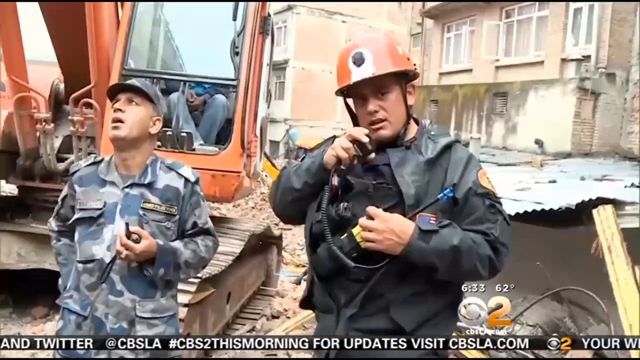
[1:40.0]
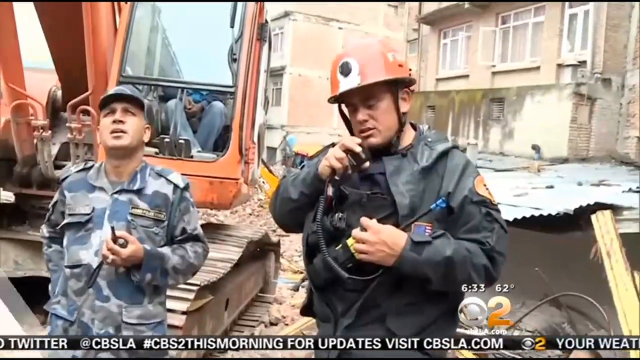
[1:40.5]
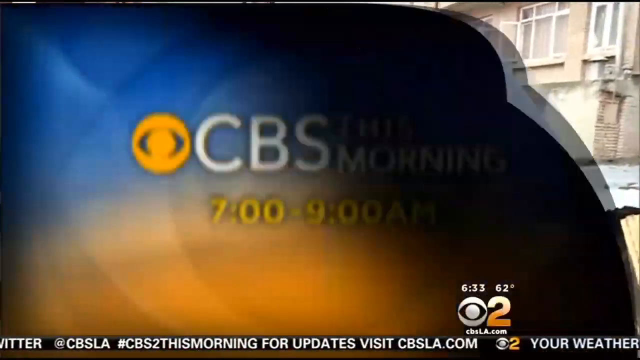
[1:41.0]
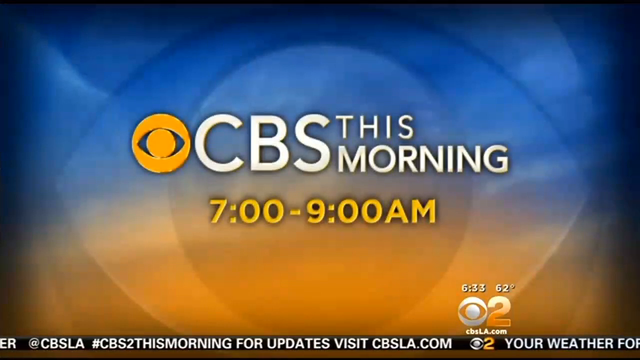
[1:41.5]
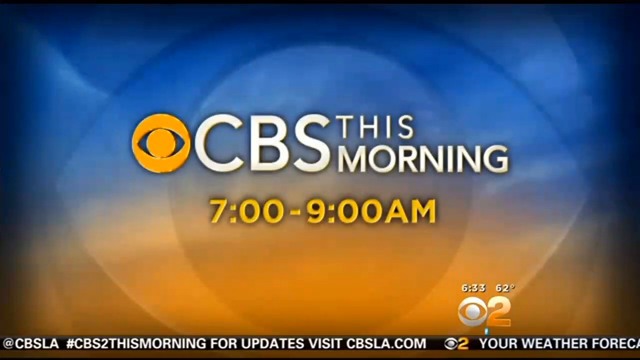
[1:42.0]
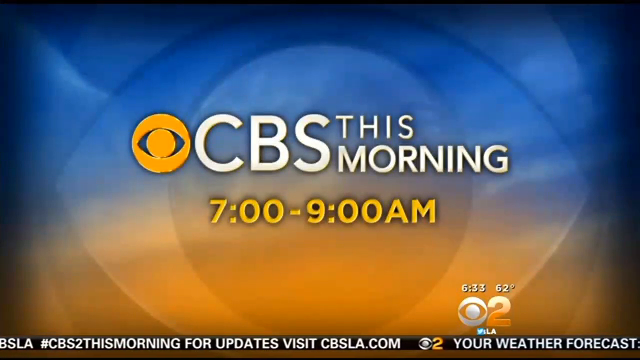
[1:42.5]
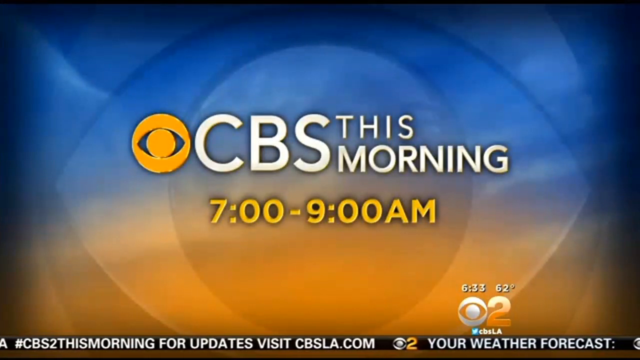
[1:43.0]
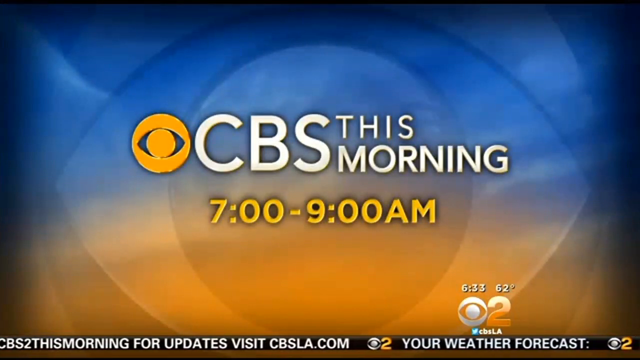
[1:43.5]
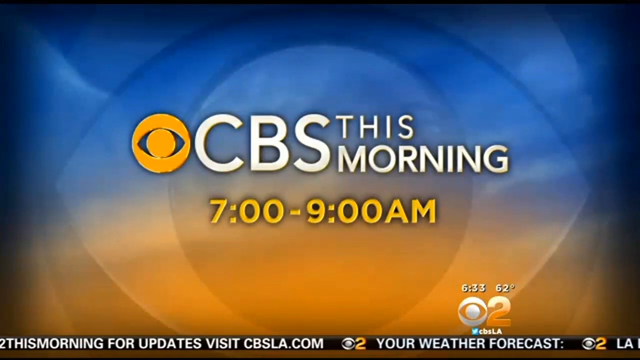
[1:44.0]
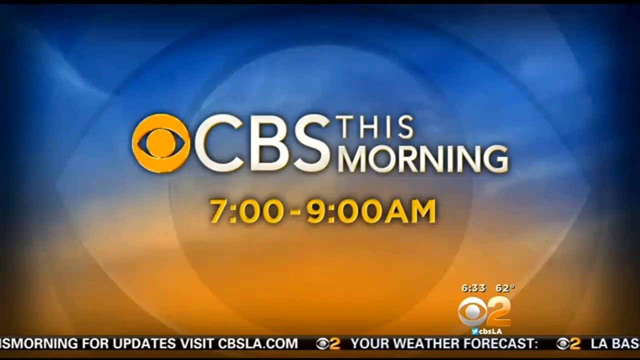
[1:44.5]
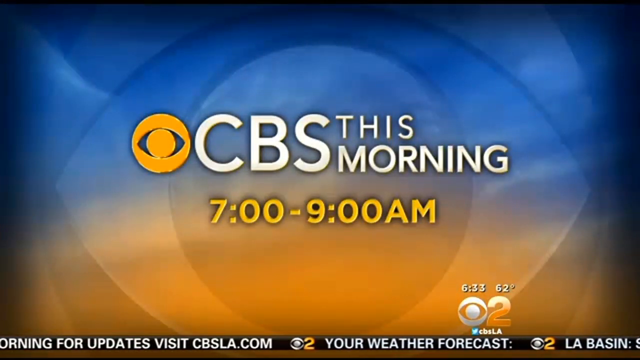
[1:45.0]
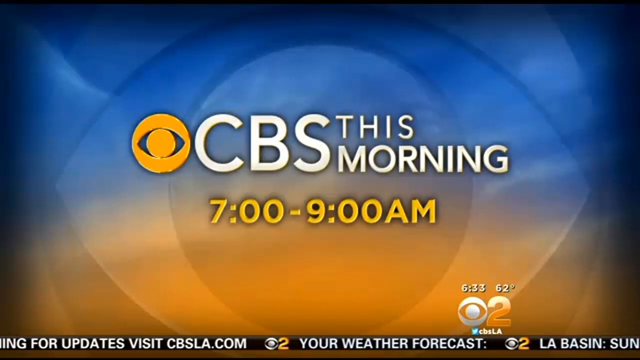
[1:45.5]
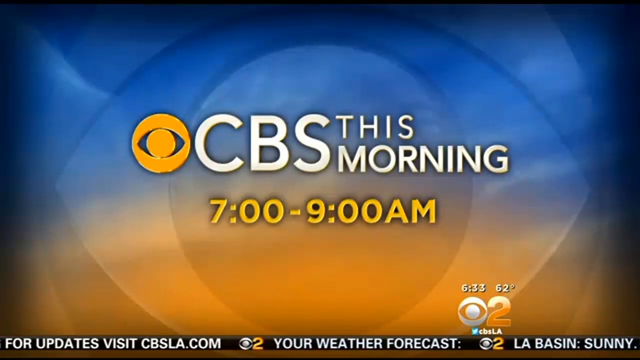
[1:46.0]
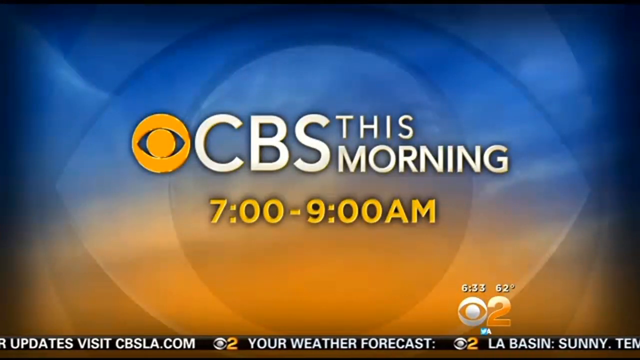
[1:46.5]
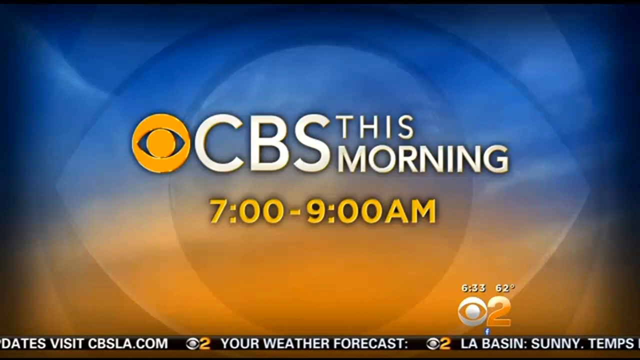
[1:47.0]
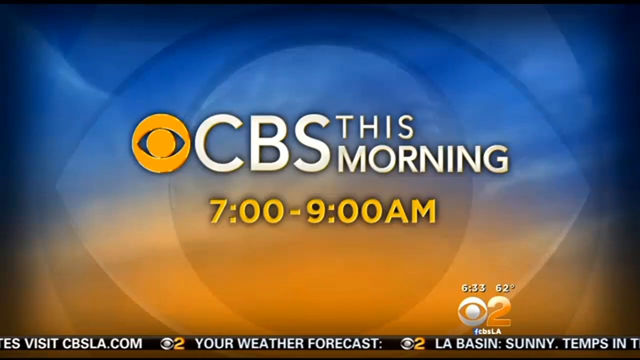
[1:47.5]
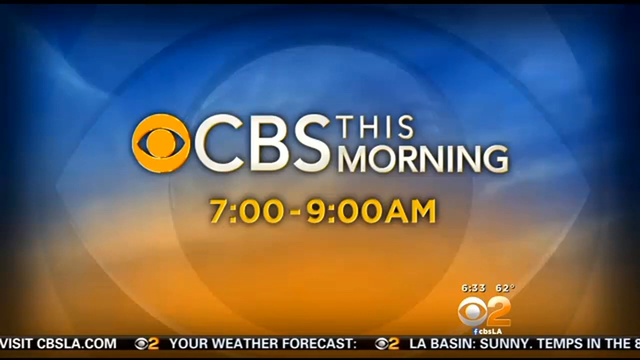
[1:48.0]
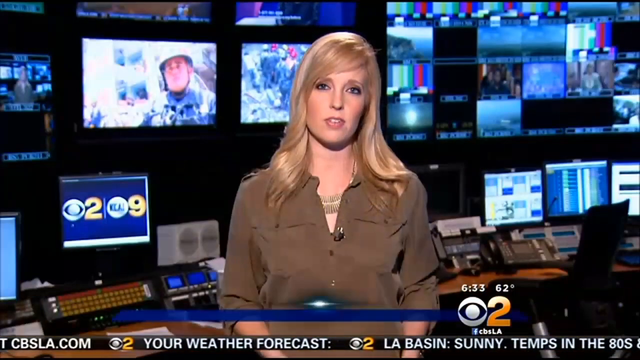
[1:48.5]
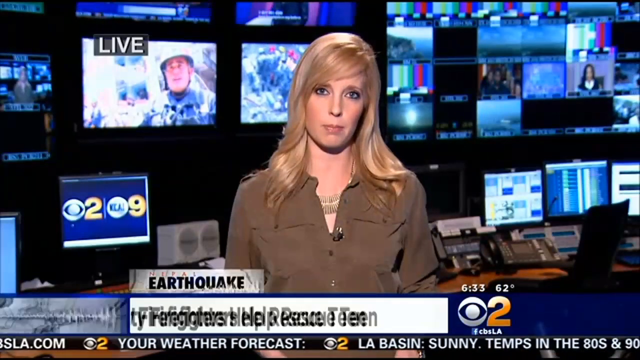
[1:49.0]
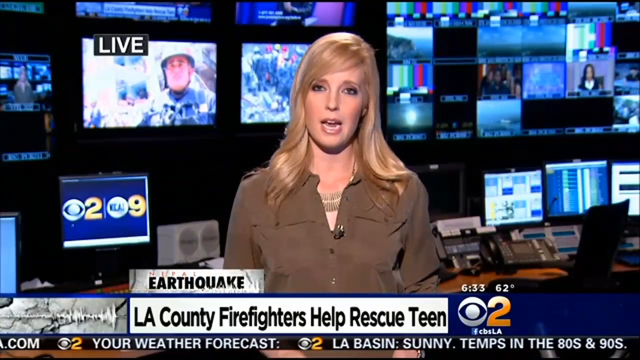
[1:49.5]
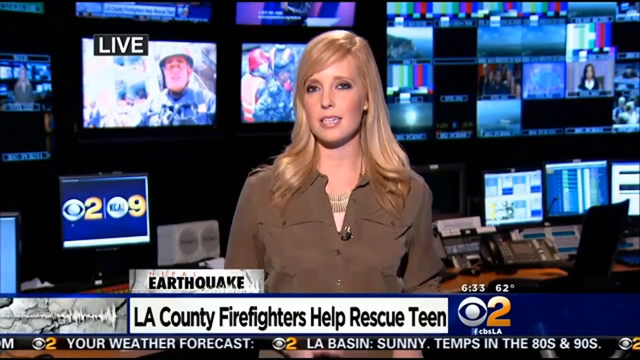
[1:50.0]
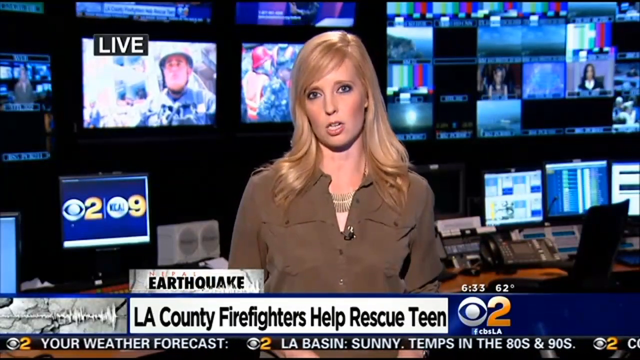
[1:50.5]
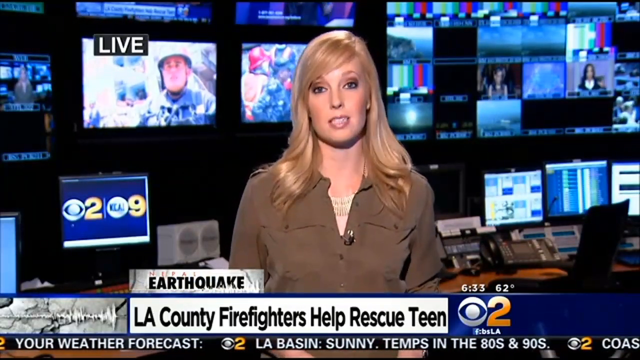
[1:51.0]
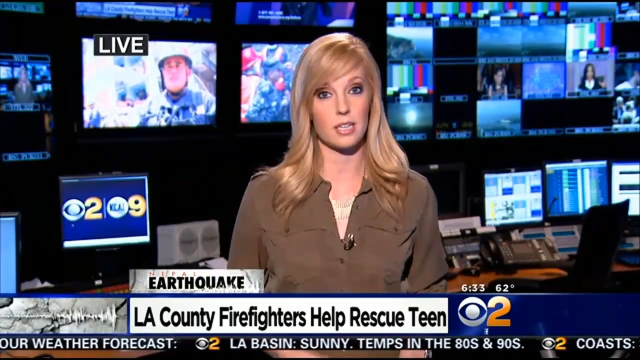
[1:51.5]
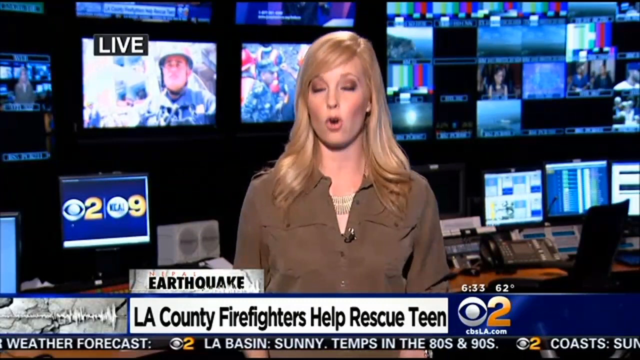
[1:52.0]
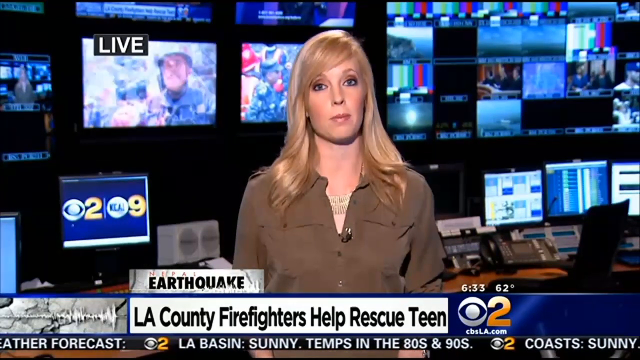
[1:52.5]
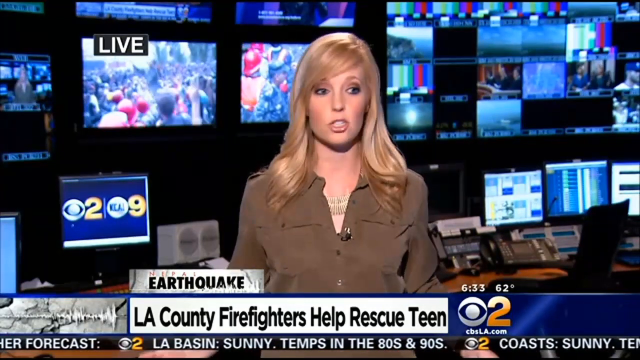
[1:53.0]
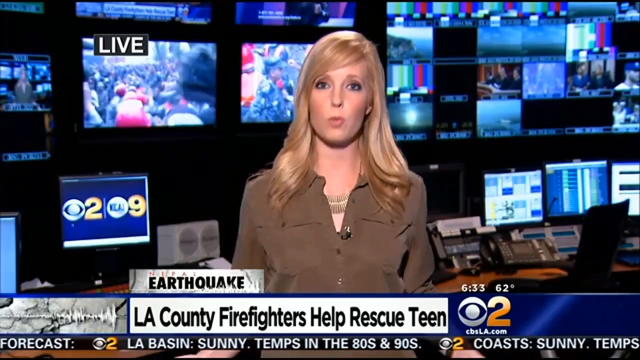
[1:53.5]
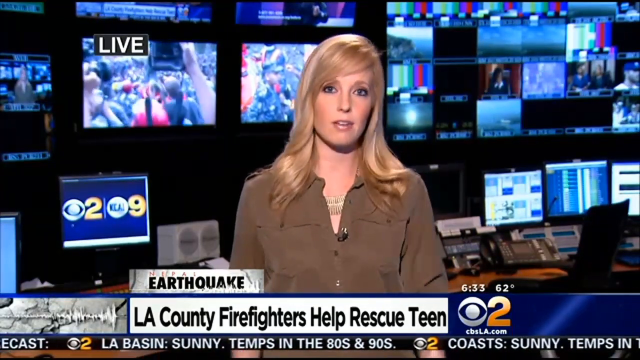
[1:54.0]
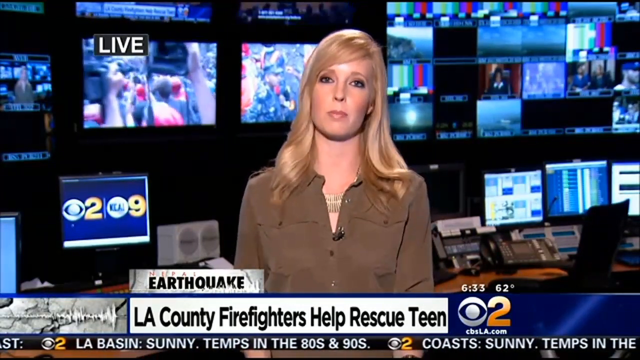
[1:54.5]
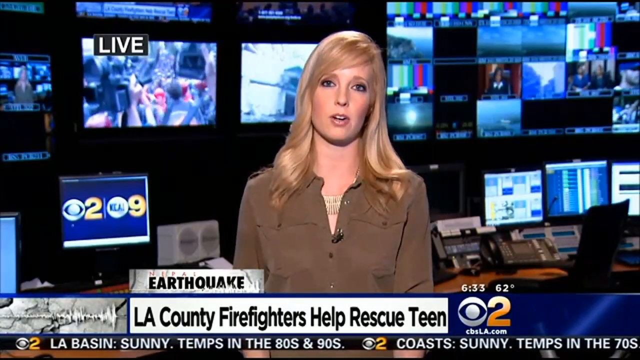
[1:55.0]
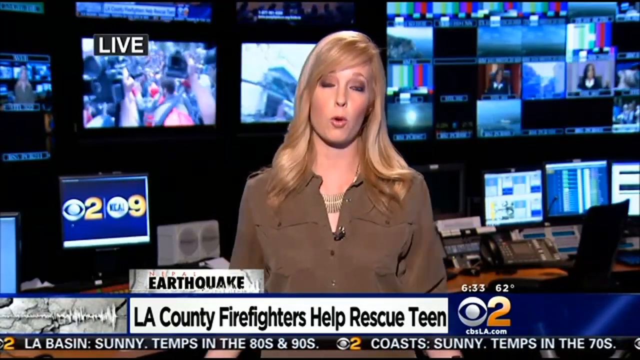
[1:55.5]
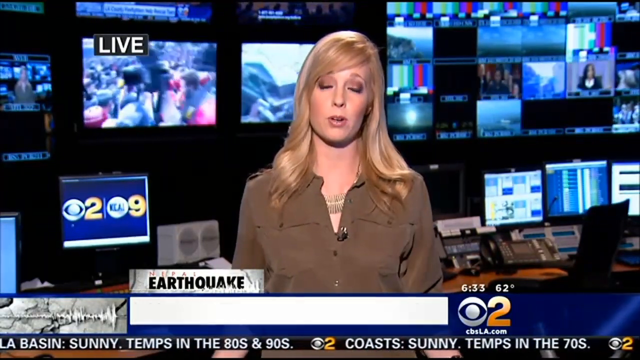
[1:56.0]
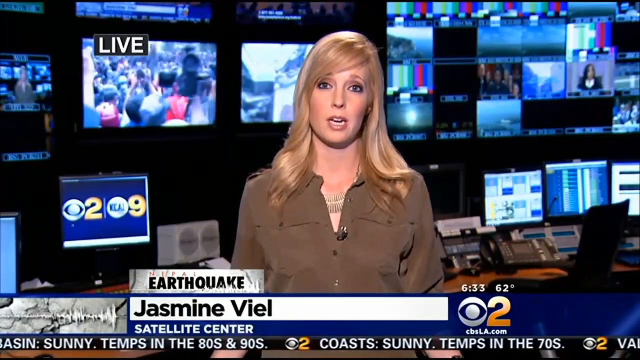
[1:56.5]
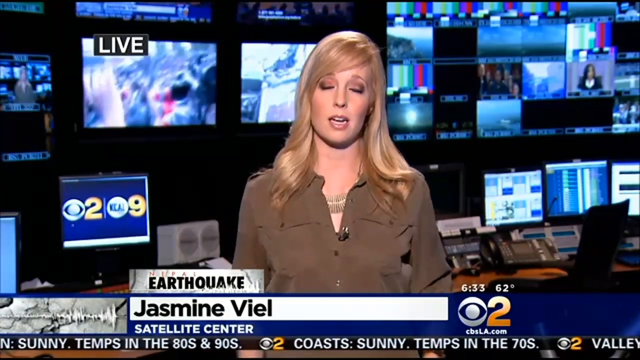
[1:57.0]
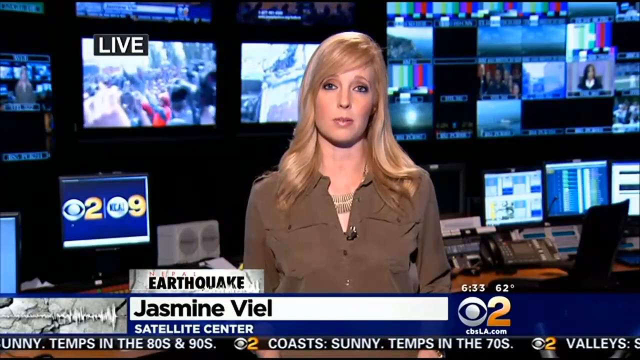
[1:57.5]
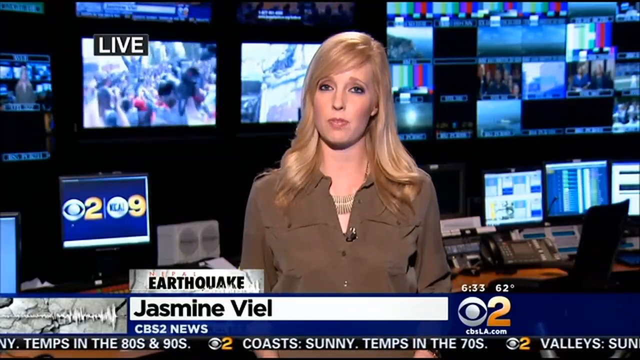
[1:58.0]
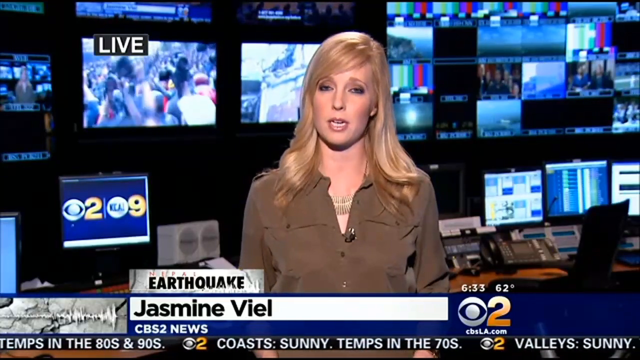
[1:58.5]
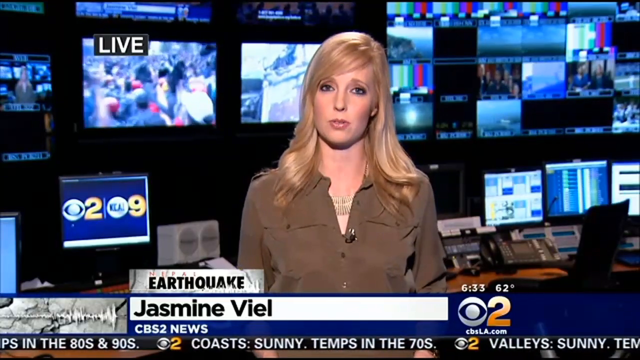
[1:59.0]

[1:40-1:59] Two men stand in front of a large piece of construction equipment and damaged buildings. The man on the left wears army fatigues and an army cap. The man on the right wears a blue jumpsuit and an orange hard hat; he holds a radio in his hands, speaking into the microphone, and is talking. A screen then shows the CBS logo and the text "CBS this morning 7 o'clock to 9 o'clock AM." Next, a white woman reporter appears in a newsroom with many screens behind her. She wears a brown button-up shirt with two pockets and has a microphone clipped to her collar. Below her is the headline "Earthquake! L.A. County Firefighters Help Rescue Teen." In the upper left-hand corner of the screen is the word "LIVE."